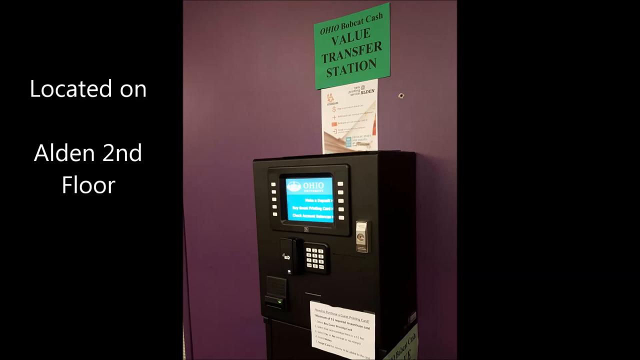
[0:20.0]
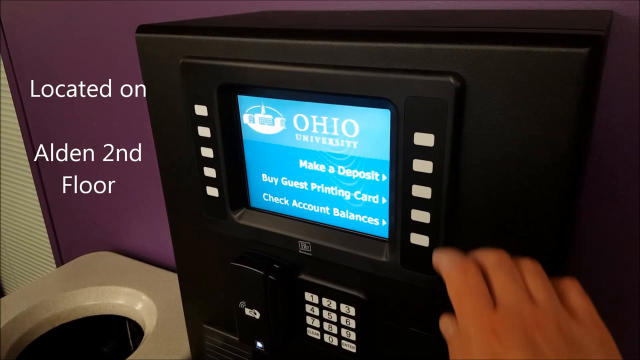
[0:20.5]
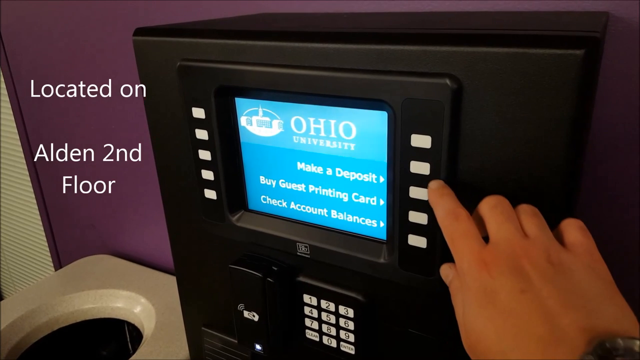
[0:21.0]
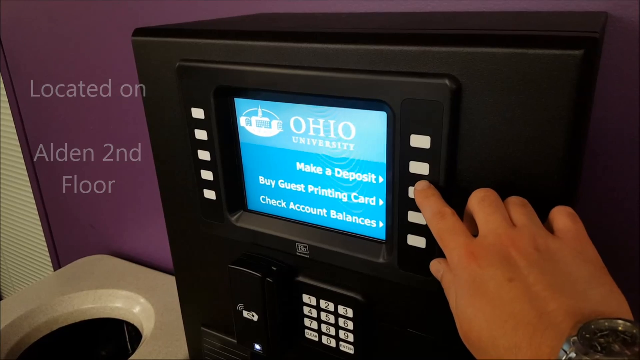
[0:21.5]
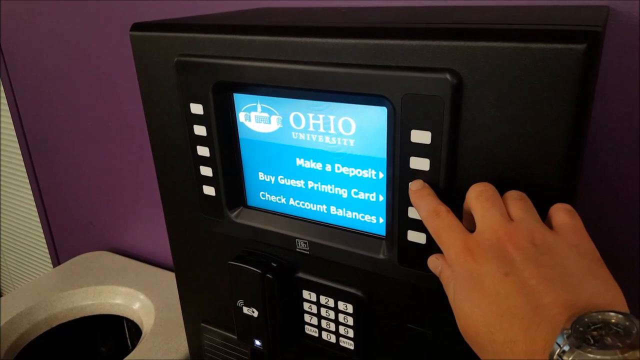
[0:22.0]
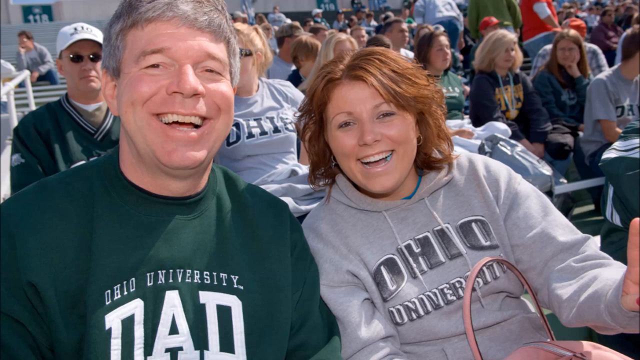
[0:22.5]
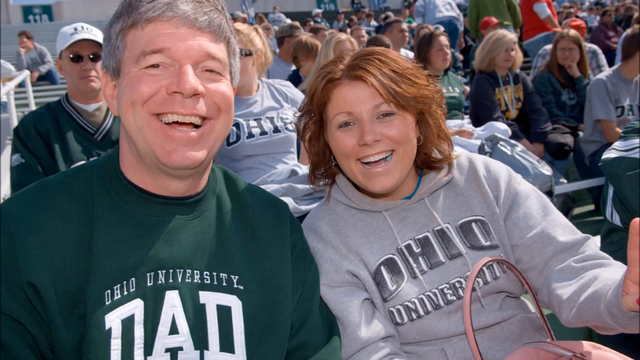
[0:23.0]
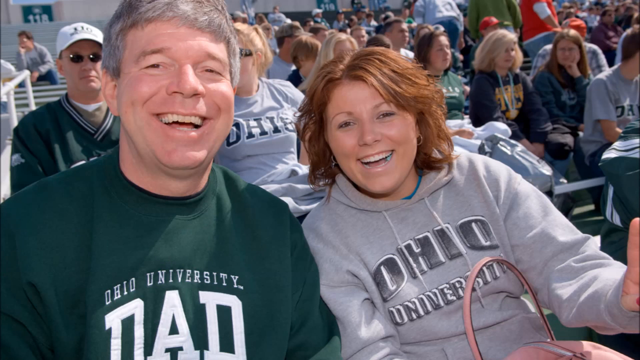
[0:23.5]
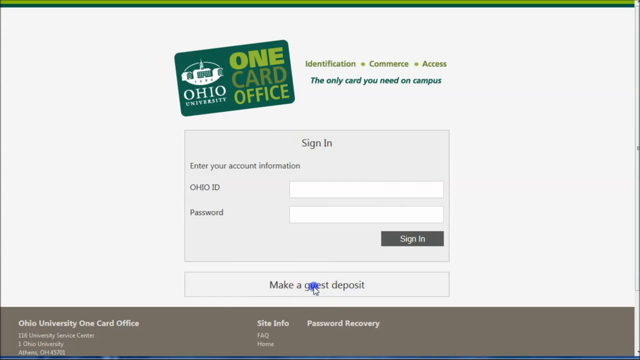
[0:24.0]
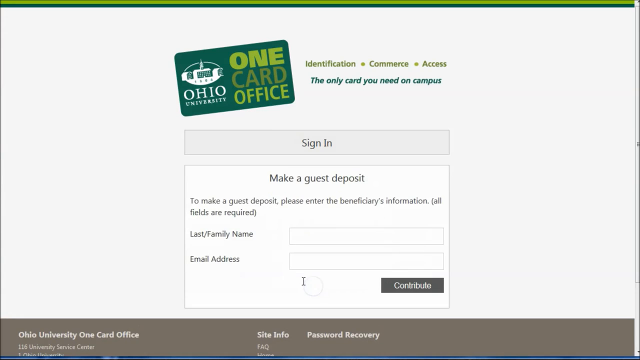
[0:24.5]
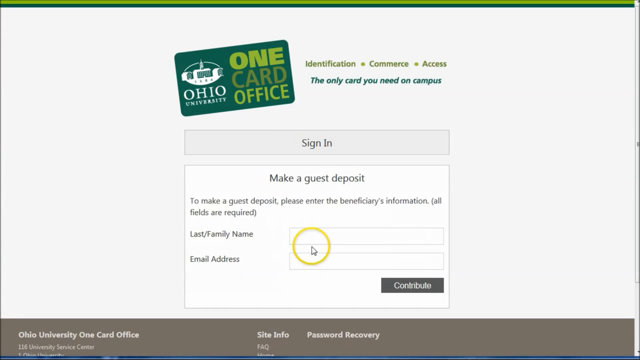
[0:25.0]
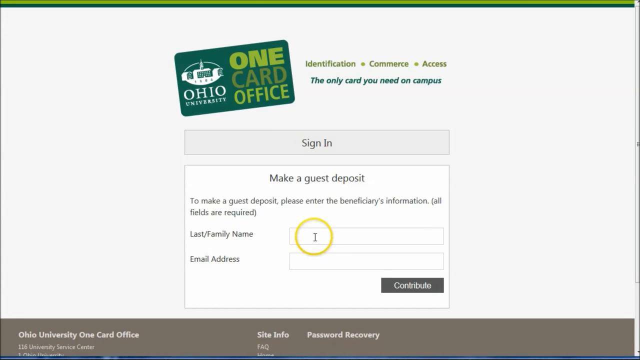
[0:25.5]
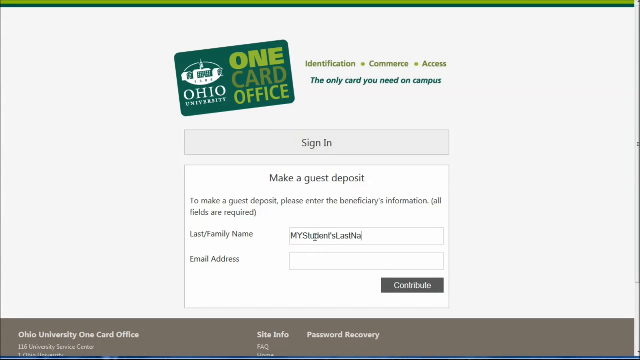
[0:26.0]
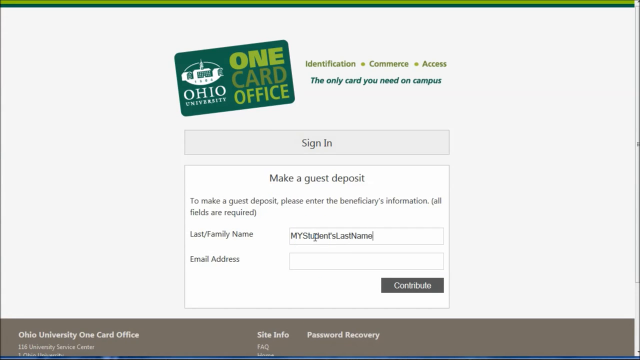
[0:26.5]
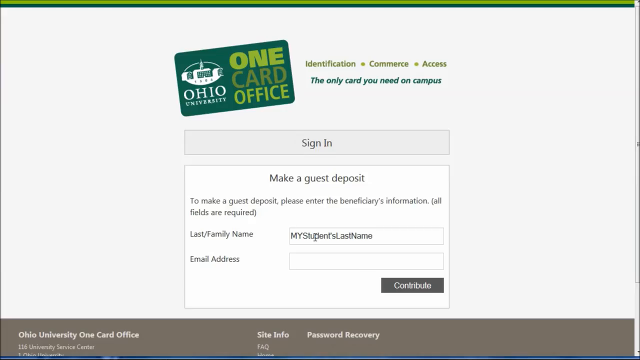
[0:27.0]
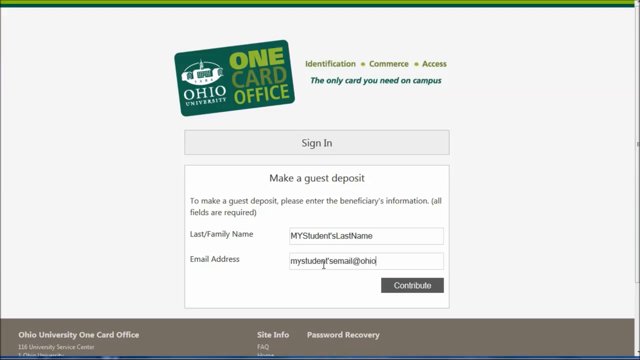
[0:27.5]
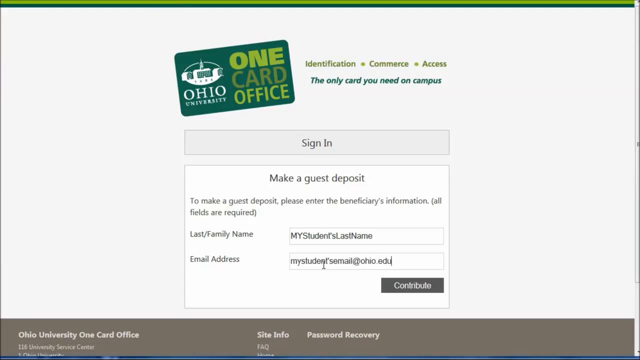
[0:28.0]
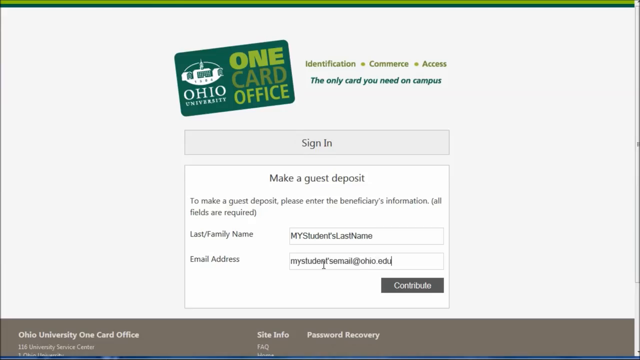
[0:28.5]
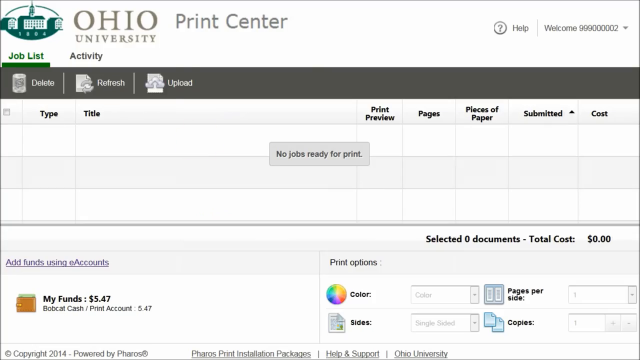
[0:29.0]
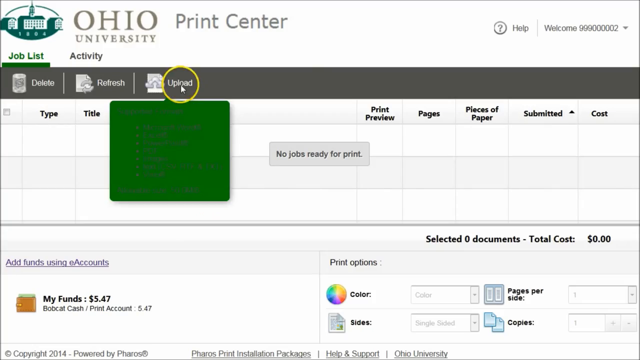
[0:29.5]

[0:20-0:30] The video shows the one card offices, where they are located in Ohio, which floor they are on, and how to get there. It shows signing in and making a deposit on the card, with a name, a signed name, and the other required information entered to access the card.